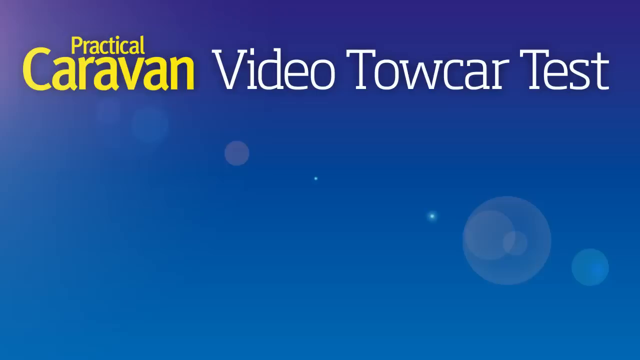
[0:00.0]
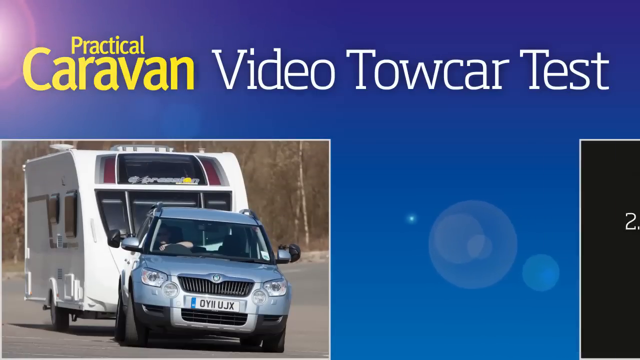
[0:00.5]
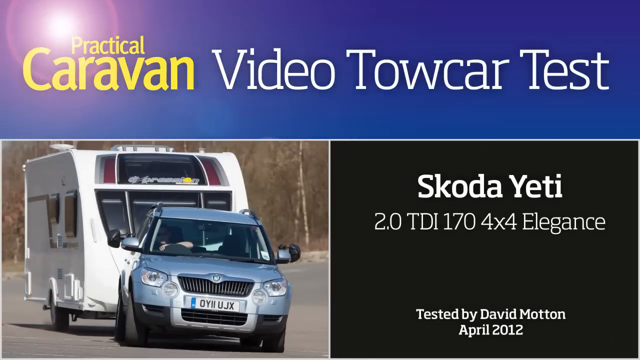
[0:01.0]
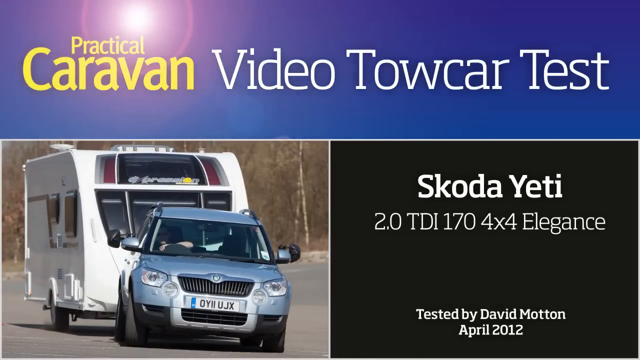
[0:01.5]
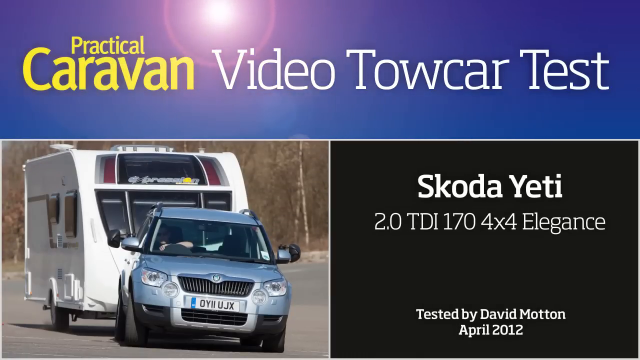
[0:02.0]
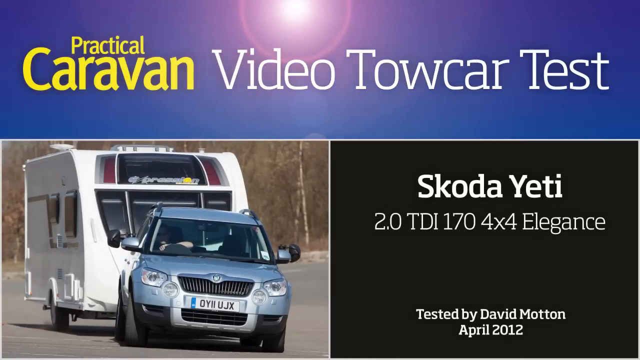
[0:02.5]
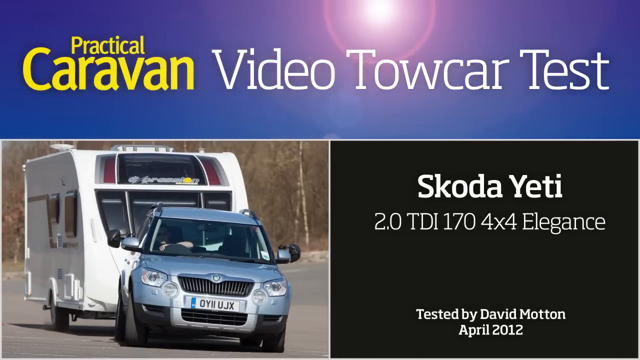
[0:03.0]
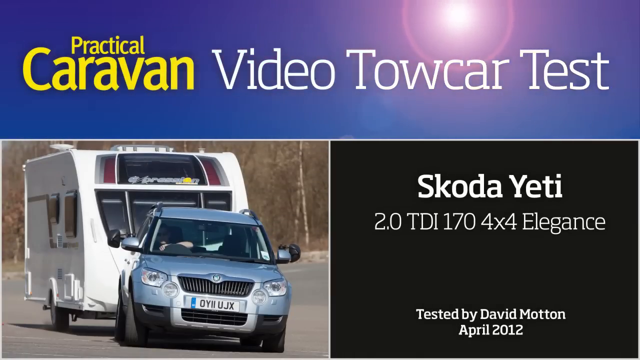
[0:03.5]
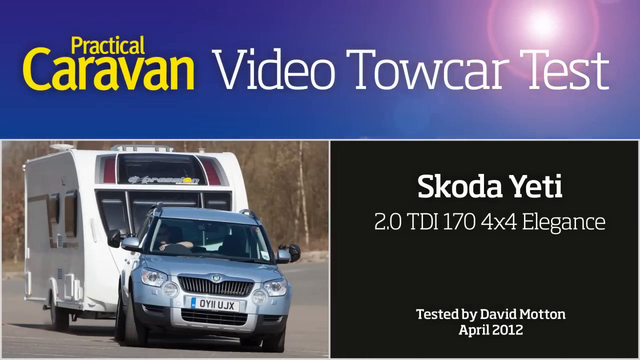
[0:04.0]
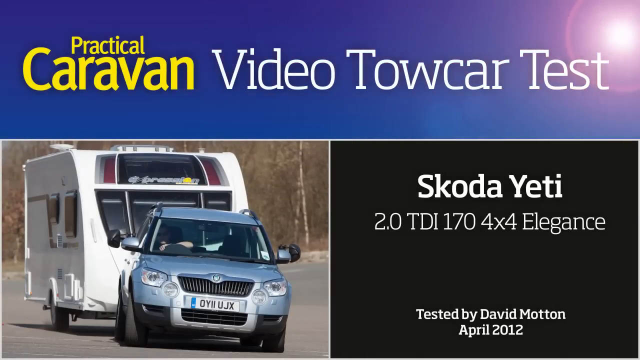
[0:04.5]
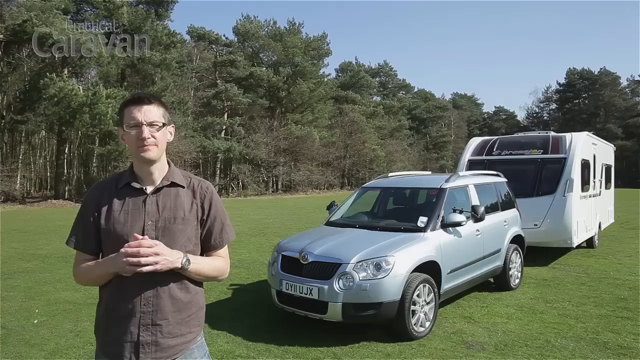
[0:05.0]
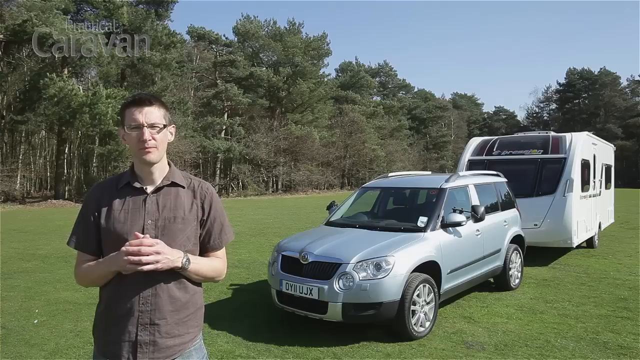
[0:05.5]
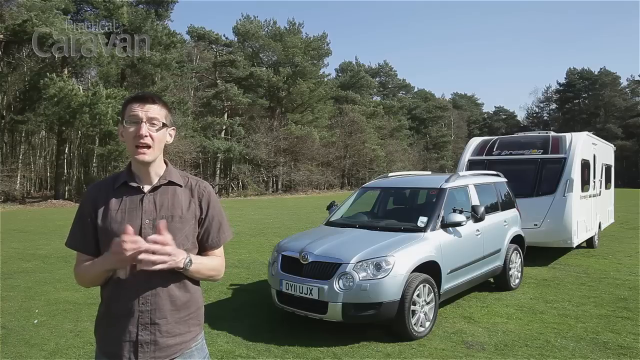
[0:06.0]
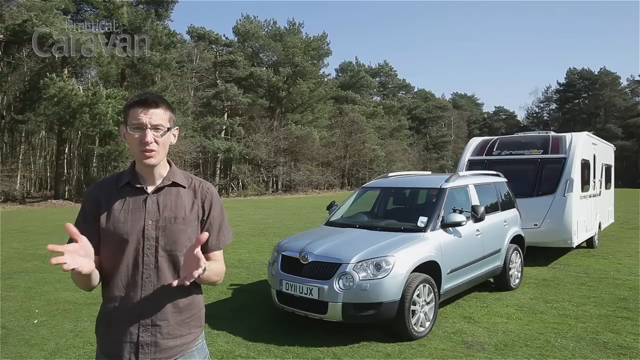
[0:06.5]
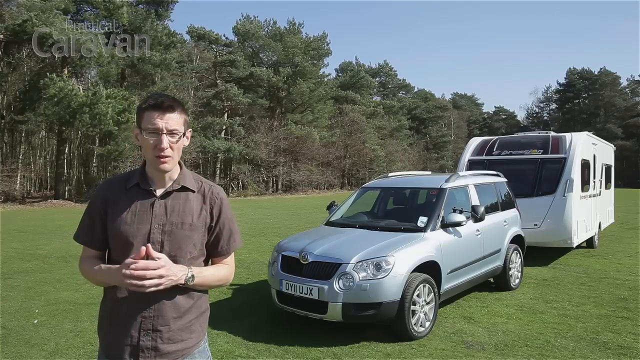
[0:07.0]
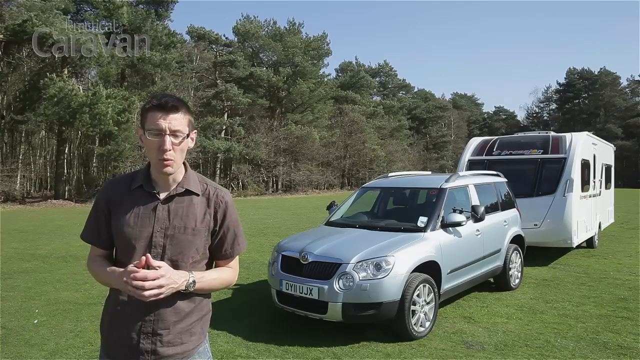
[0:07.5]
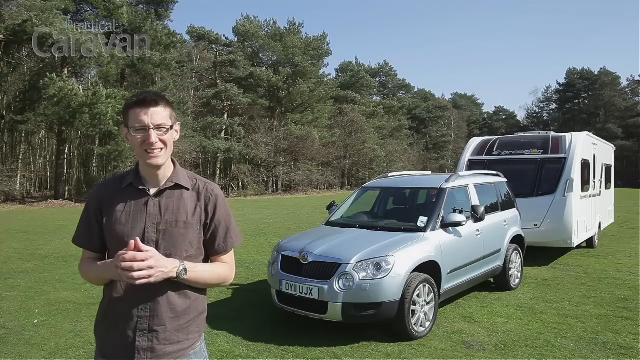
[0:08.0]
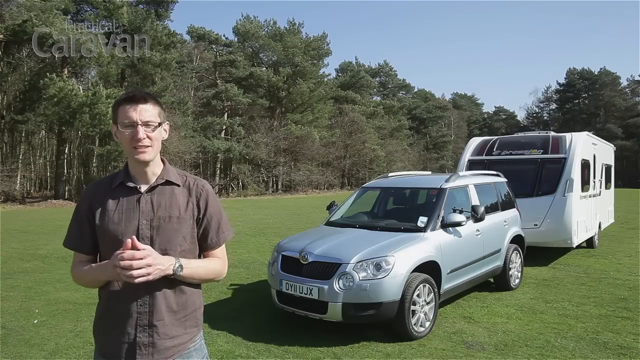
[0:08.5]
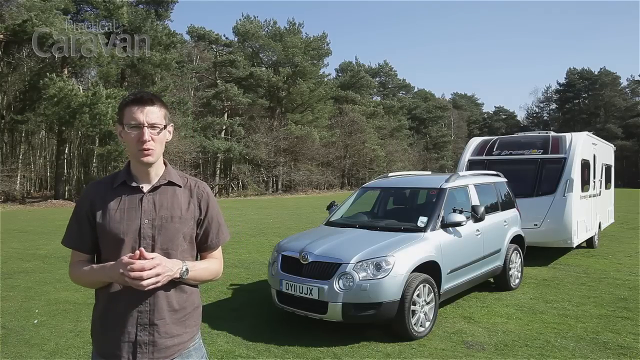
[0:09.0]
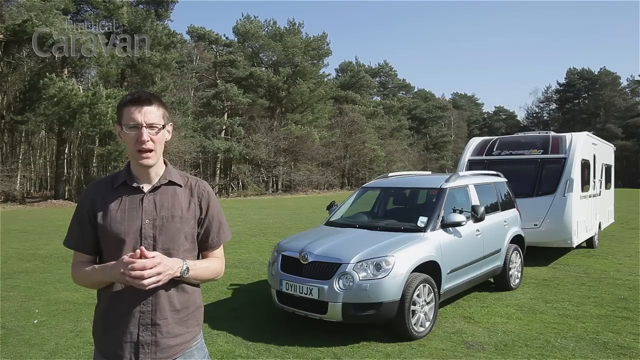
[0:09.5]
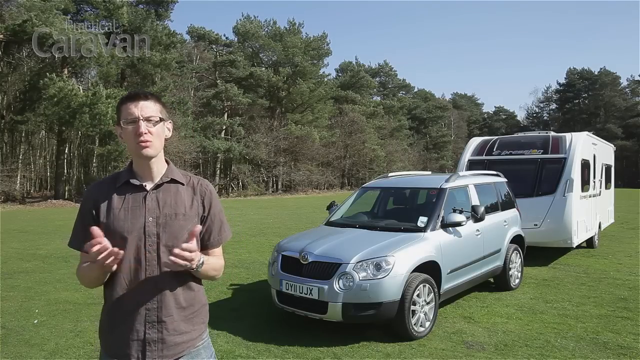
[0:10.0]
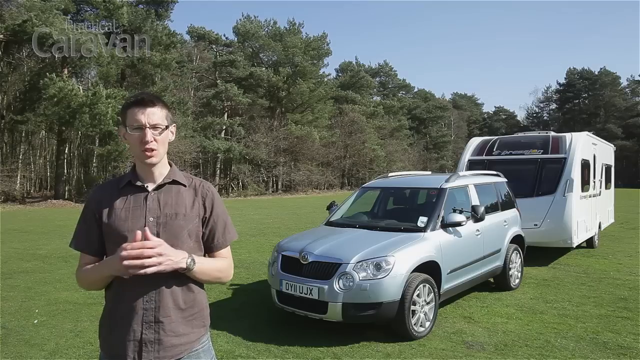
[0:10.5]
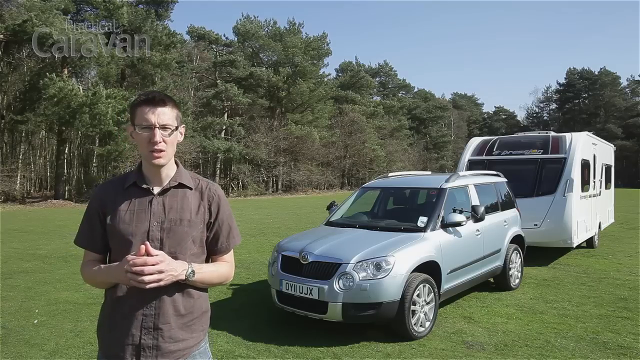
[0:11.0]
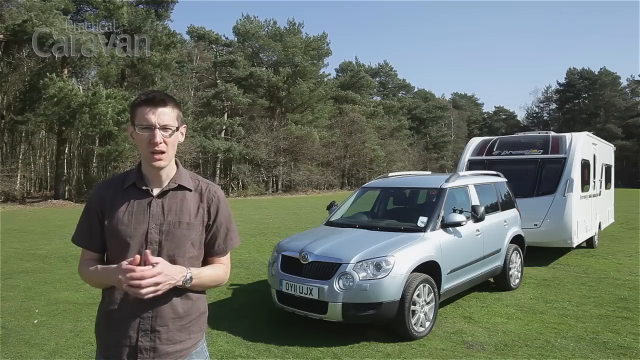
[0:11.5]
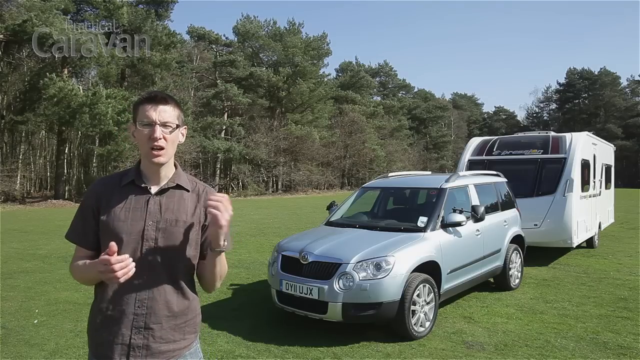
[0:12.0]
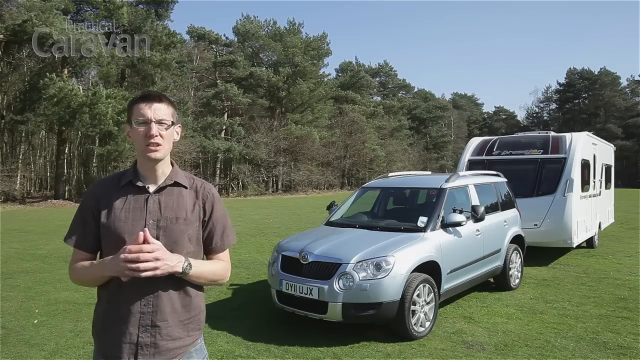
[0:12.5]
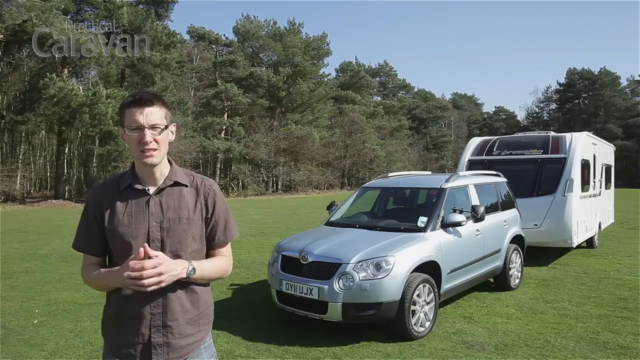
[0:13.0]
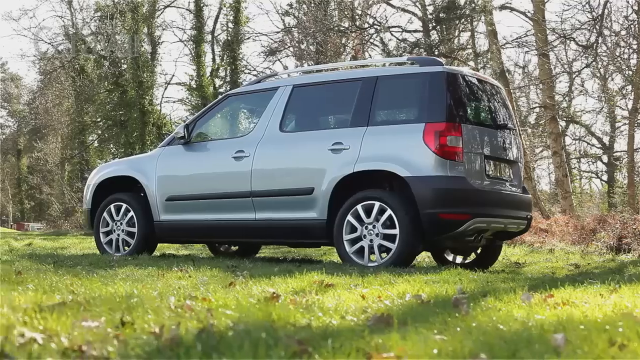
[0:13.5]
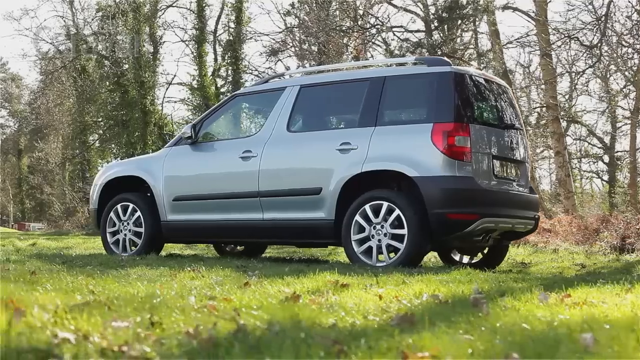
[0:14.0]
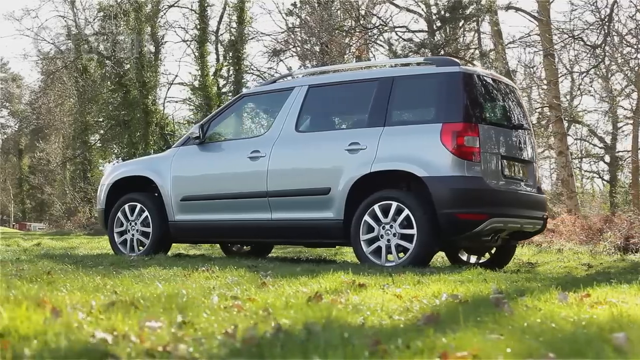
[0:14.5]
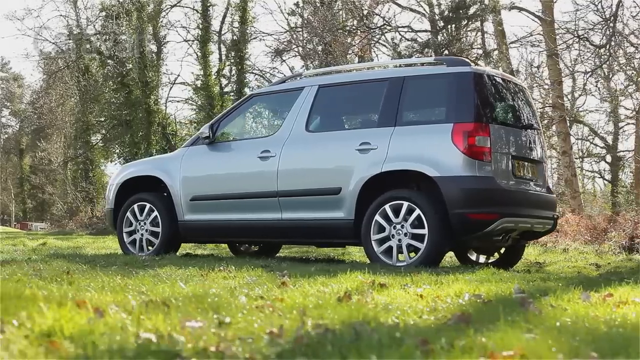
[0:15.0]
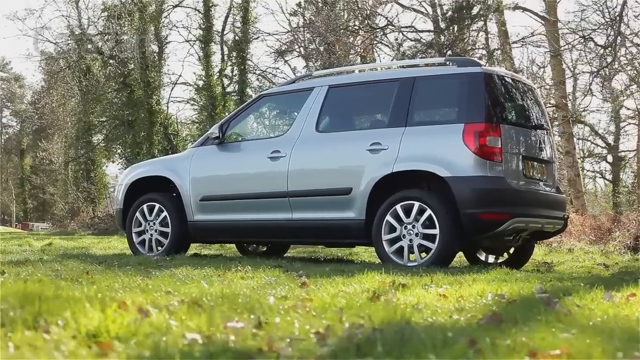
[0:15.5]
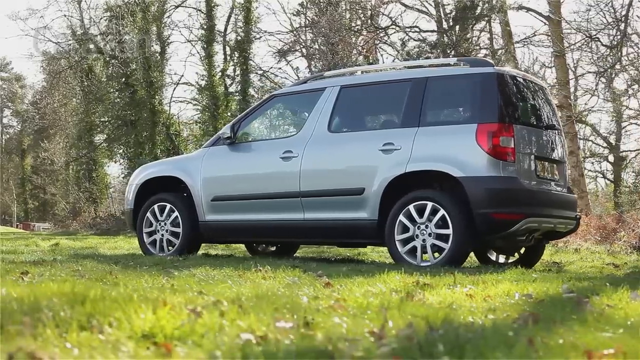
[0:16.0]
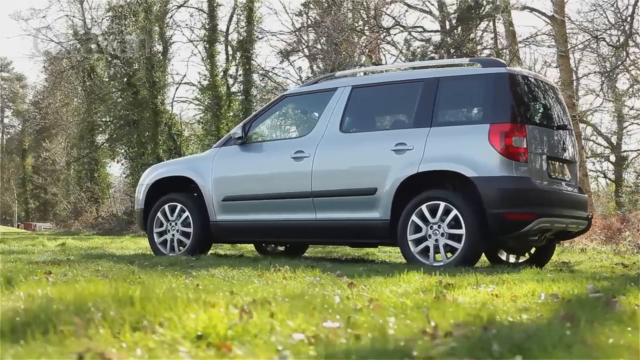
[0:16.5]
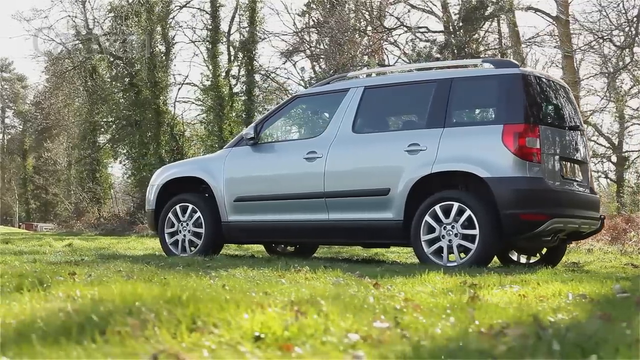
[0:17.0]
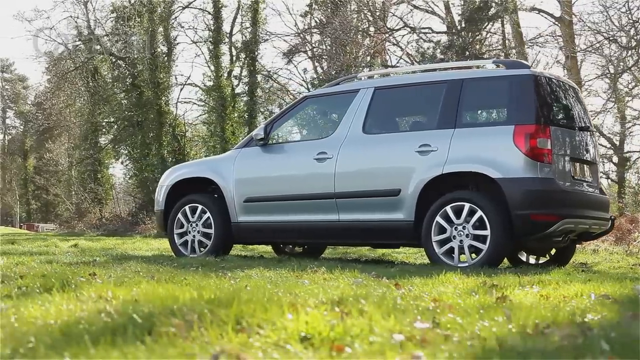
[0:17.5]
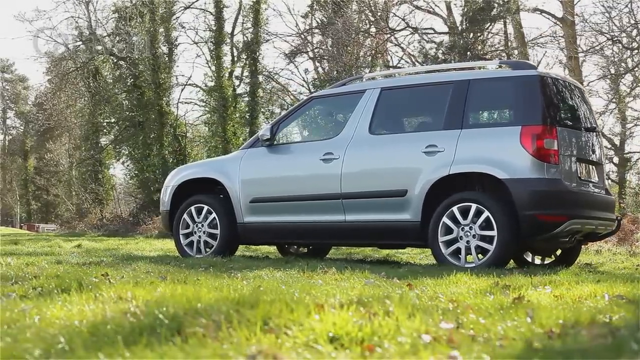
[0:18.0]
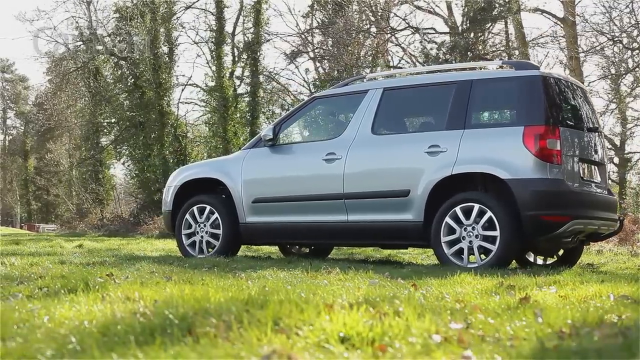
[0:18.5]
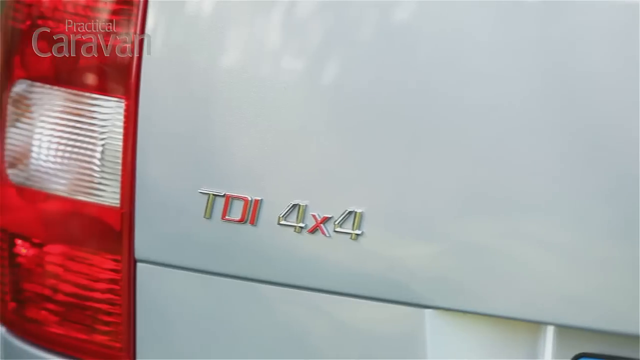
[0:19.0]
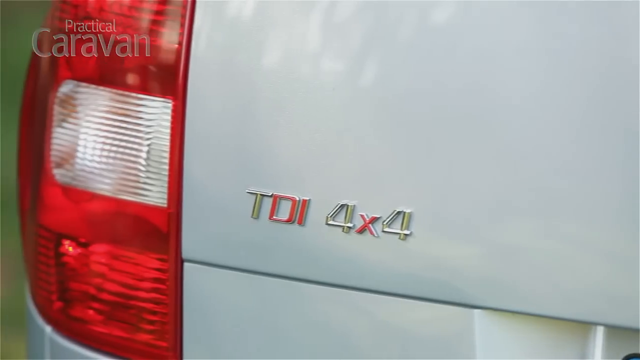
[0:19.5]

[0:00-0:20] The video opens on a blue background with the words "Practical Caravan Video Tile Car Test" at the top, "Practical Caravan" in yellow and "Video Tile Car Test" in white. Two pictures pop up. The one on the left appears to show a gray SUV pulling a trailer. On the right is a black box with white words reading "Skoda Yeti 2.0 TDI 170 4x4 Elegance, tested by David Motten, April 2012". Next, a man with fair skin, glasses and brown hair, wearing a brown short-sleeved shirt, is standing in a forestry area where the grass is cut and there are a lot of trees in the background. He is standing in front of the SUV, and behind the SUV is a white trailer. He talks with his hands clasped in front of his chest. Then the SUV is shown from a side angle, with the camera just looking at it, followed by a close-up of the back part of the car showing "TDI 4x4" next to a red rear light.